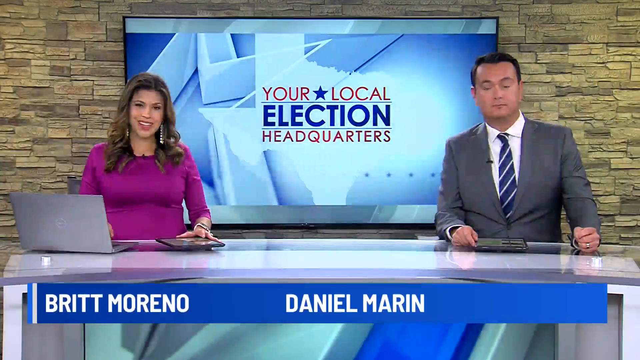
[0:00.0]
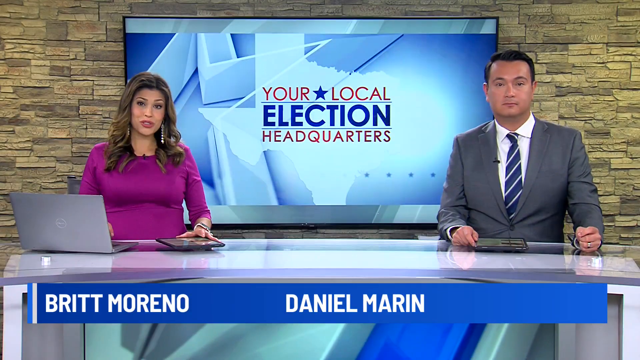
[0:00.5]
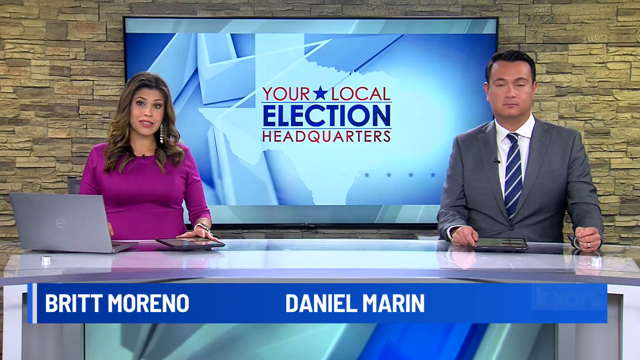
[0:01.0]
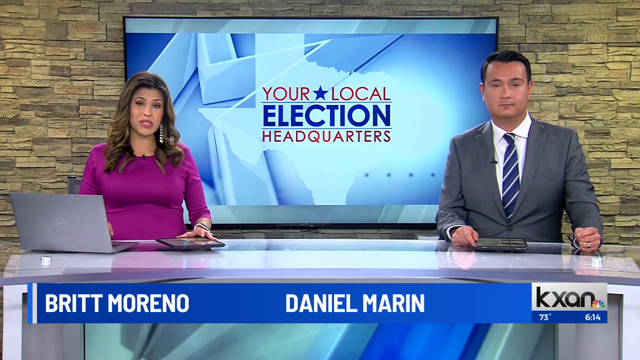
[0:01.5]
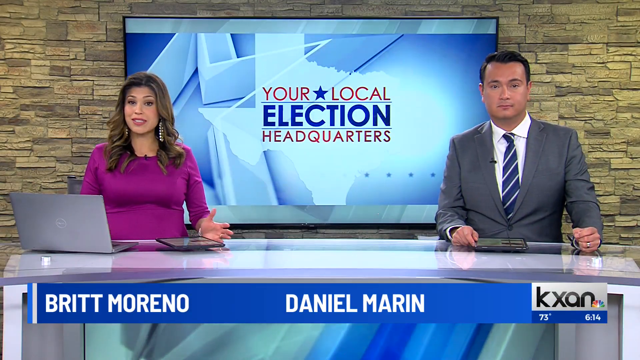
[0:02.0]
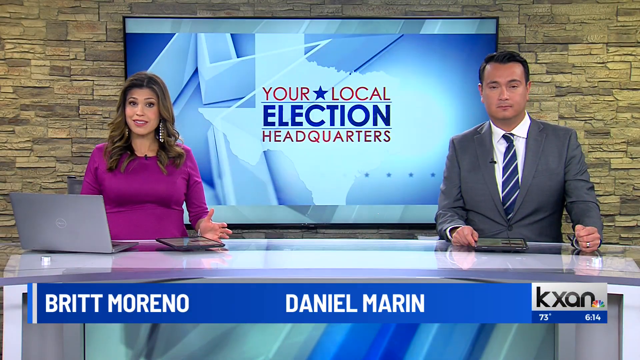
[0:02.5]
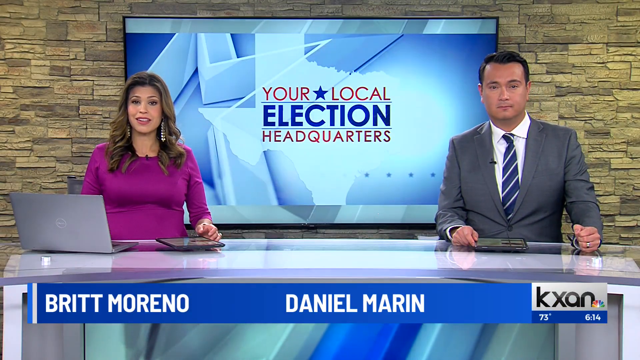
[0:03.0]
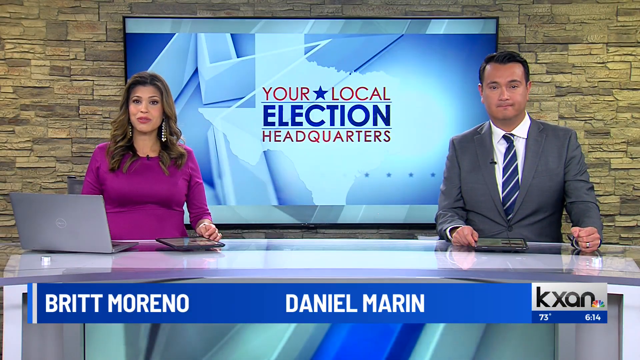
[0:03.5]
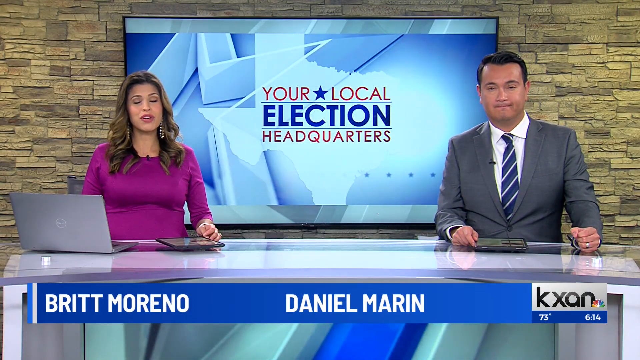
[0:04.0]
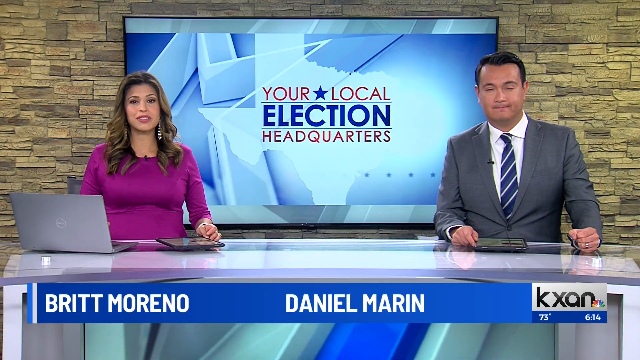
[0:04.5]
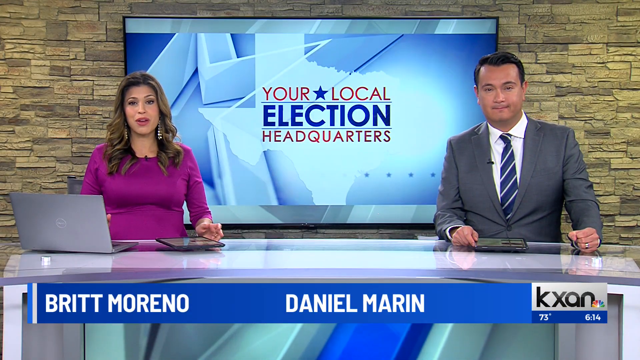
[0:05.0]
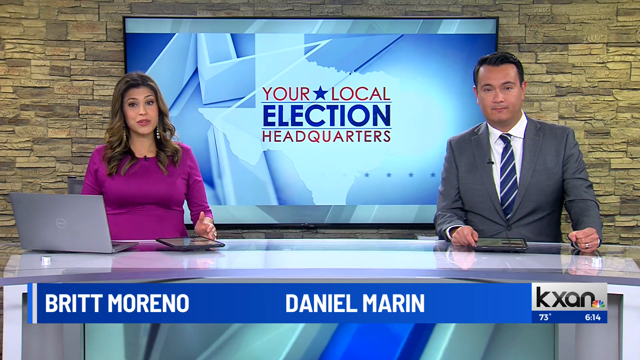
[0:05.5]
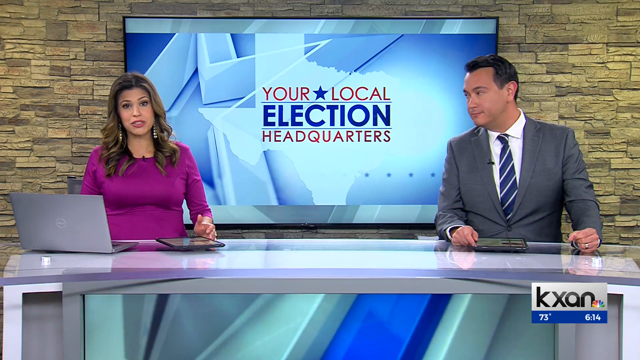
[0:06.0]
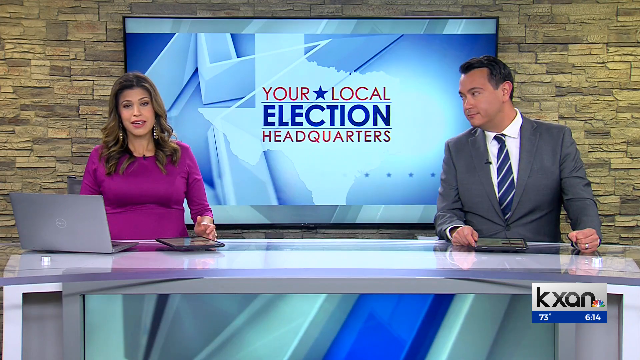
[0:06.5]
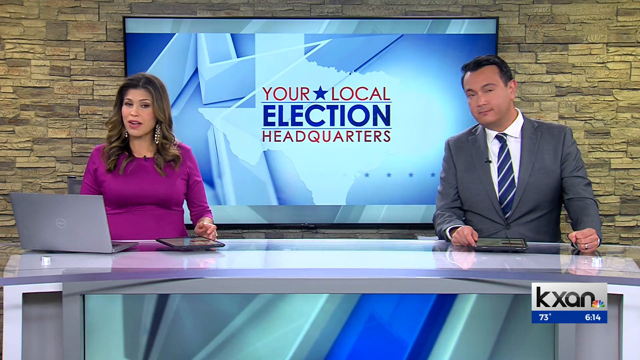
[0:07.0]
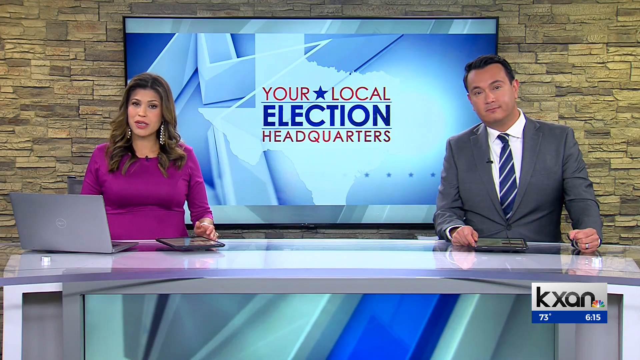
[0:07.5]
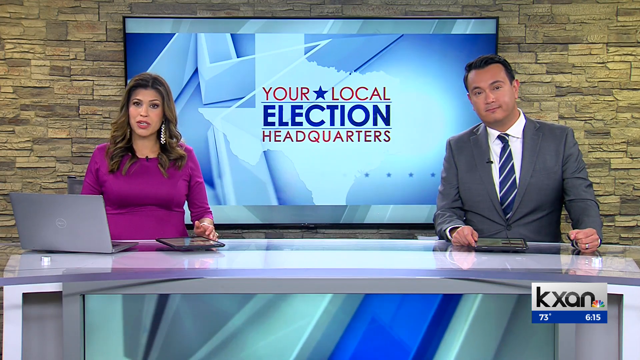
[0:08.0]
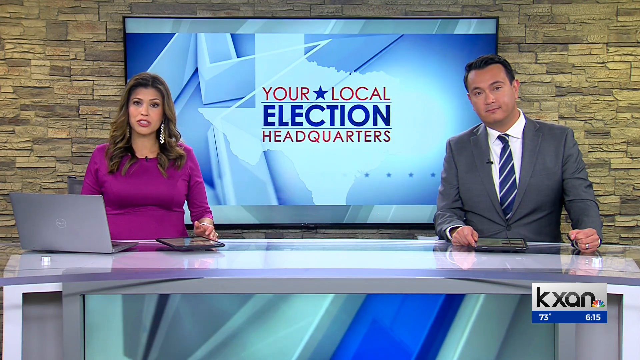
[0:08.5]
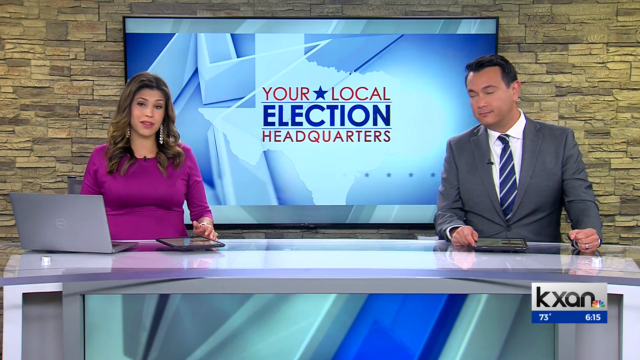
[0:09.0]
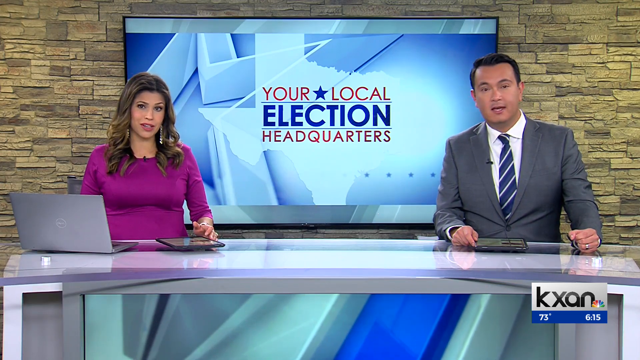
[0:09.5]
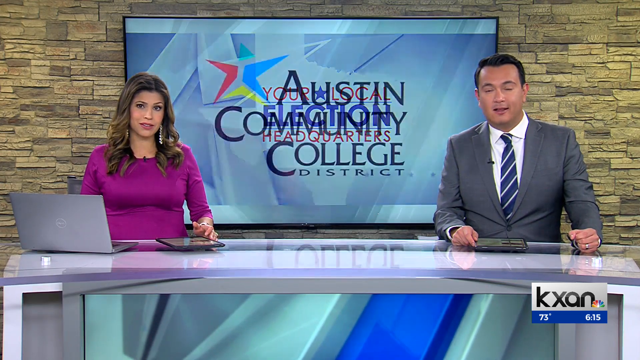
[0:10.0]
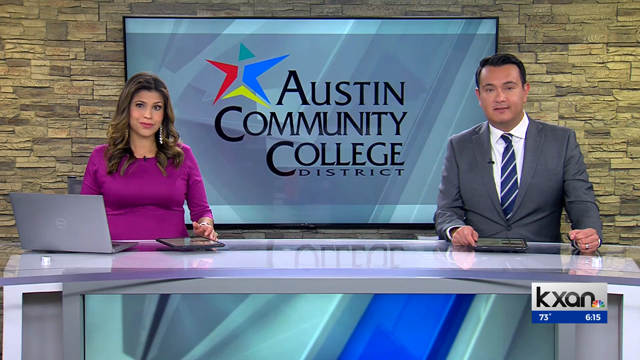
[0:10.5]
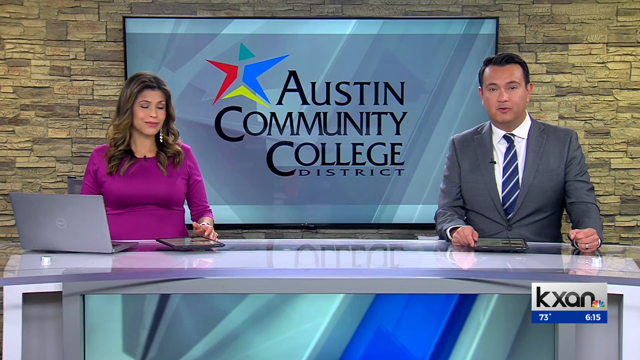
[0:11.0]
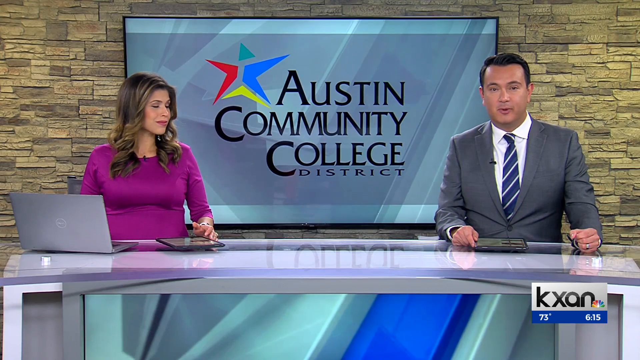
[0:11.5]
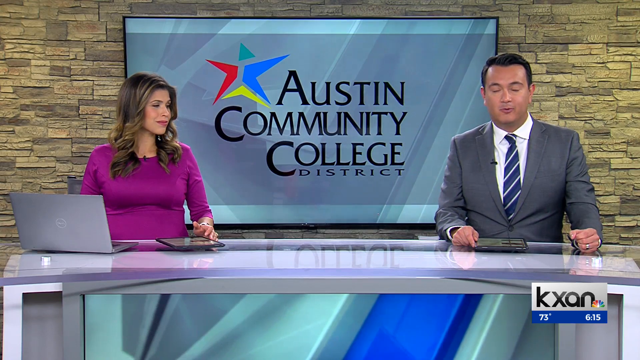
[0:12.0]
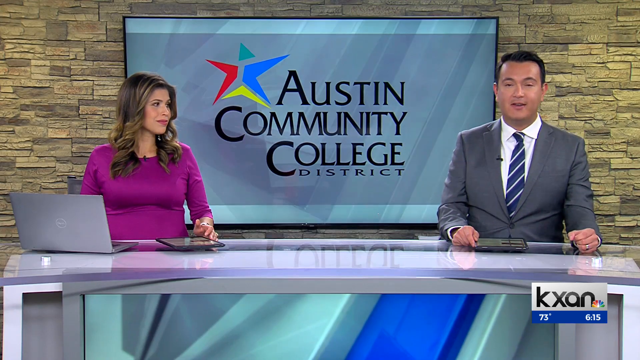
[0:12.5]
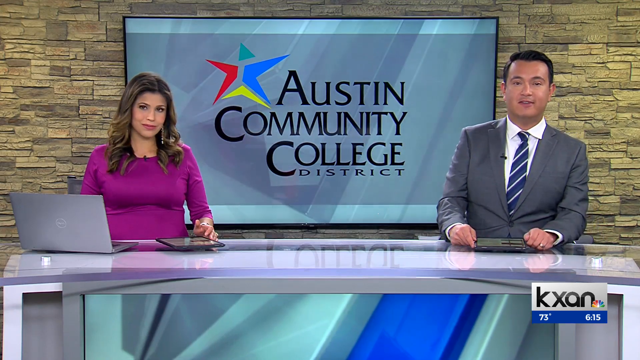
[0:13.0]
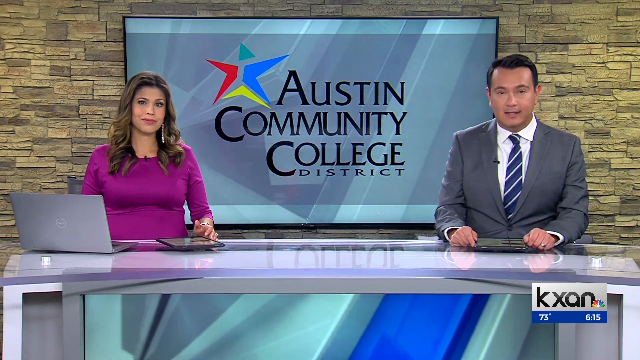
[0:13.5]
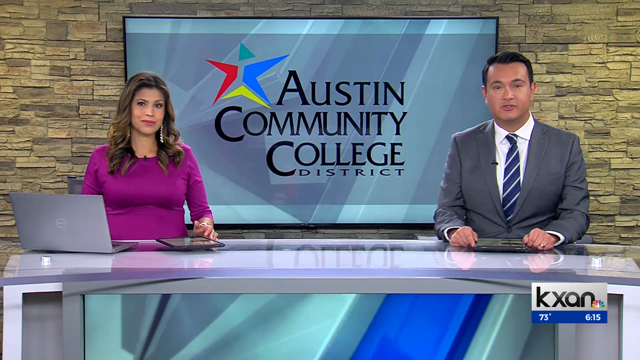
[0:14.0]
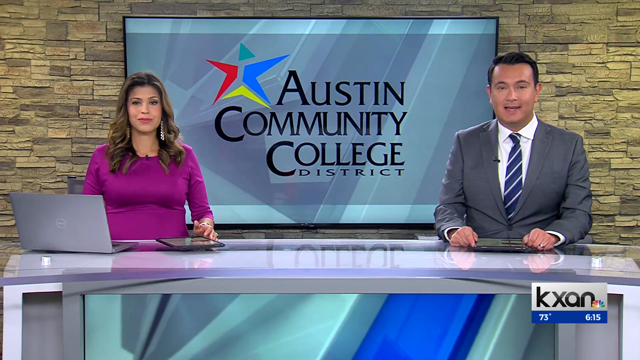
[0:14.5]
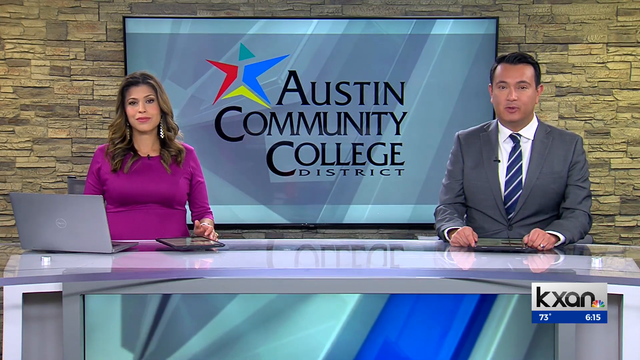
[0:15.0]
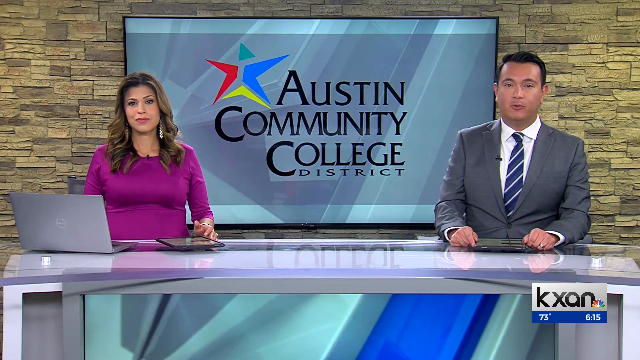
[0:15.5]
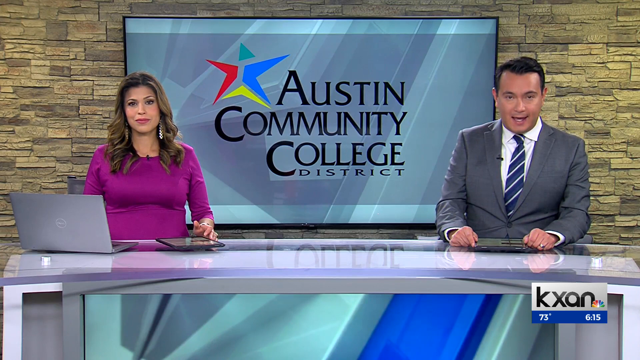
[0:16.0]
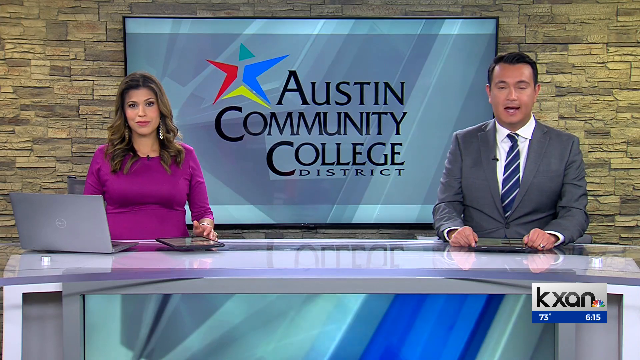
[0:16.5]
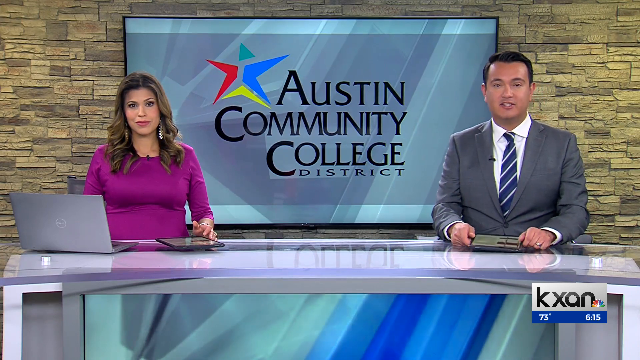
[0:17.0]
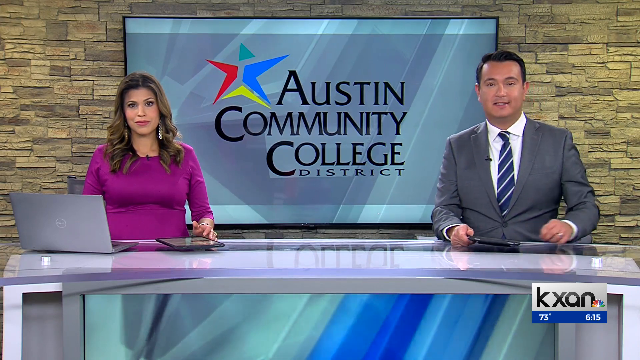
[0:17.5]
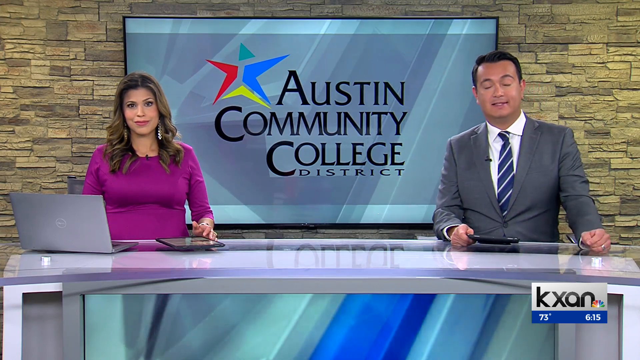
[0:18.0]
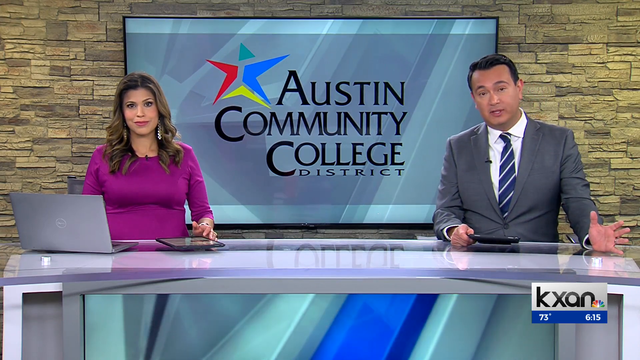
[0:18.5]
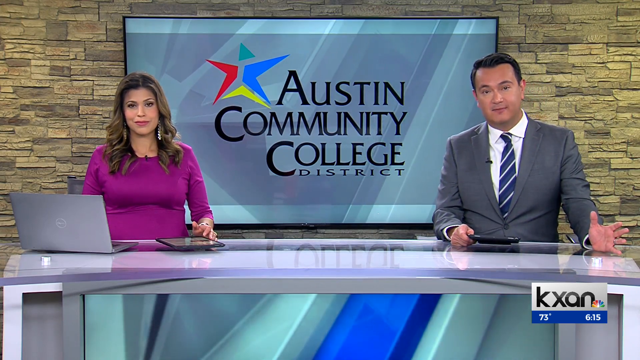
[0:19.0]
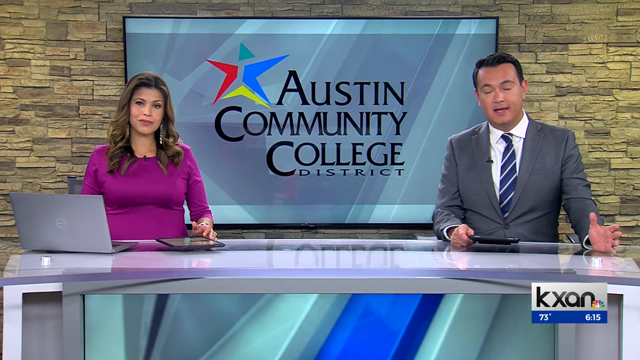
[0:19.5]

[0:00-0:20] A close shot shows a newscast studio. The wall has a brick-like texture, and a big TV screen is on it. In the middle of the screen is a graphic of the state of Texas, and in the center of that graphic are the words "your local election headquarters." A blue star is between "your" and "local." "Your," "local" and "headquarters" are red, and "election" is blue. Two newscasters are on either side of the television. To the right is a man in a gray suit, white shirt, and blue and white tie; his name, Daniel Martin, appears beneath him on the splash screen. To the left is a woman newscaster wearing a fuchsia top, with a laptop and a tablet in front of her; the splash screen gives her name as Britt Marino. The male newscaster also has a tablet in front of him. In the bottom right is a sticker with the call letters K-X-A-N and the local NBC logo, and underneath it the weather and time: 73 degrees and 6:14. The newscasters look at the camera while giving the news and look at each other as the other talks. The lower part of the desk they sit at is thick, clear plexiglass, and underneath it is a panel with blue and green in it. The desk beneath the plexiglass is white with silver knobs at the top. The screen then changes to the words "Austin Community College District." To the left of "Austin" is a graphic that looks like a star broken into four pieces: the top piece is a green triangle, the left piece with two legs is red, the bottom piece with two legs is yellow, and the right piece with two legs is blue. The newscasters continue to talk to the camera. The area is indoors and well lit.